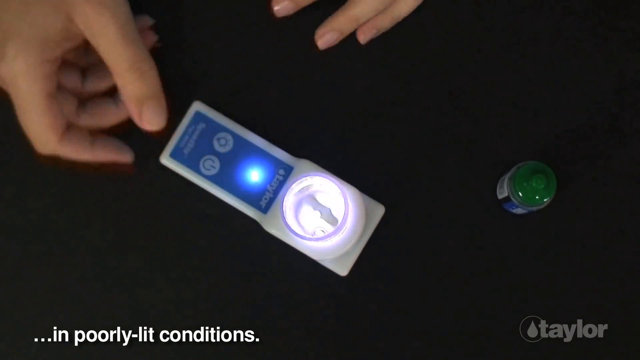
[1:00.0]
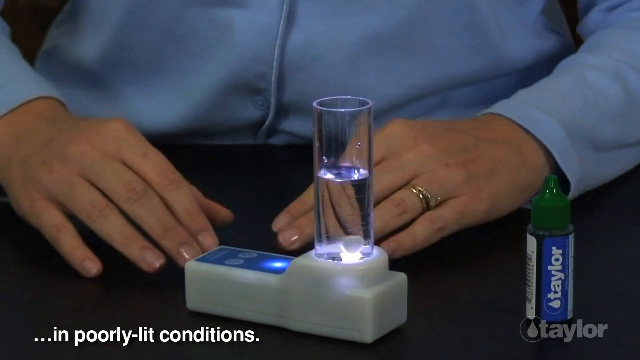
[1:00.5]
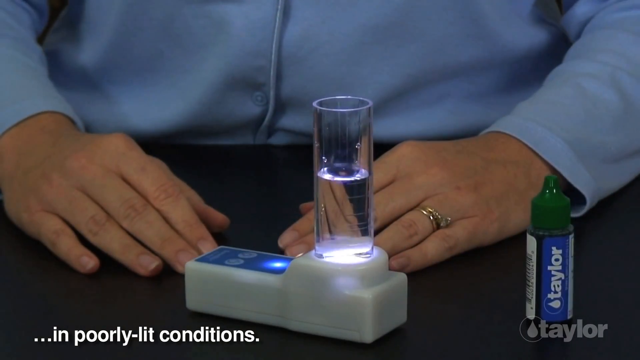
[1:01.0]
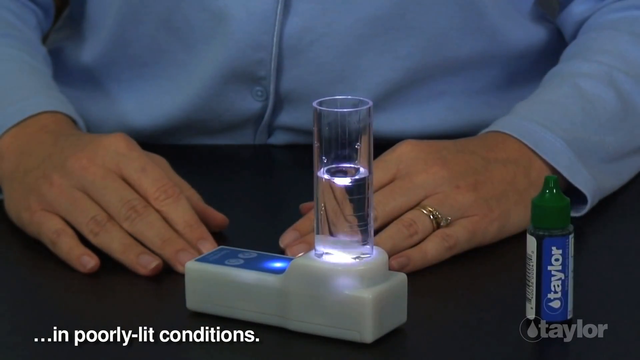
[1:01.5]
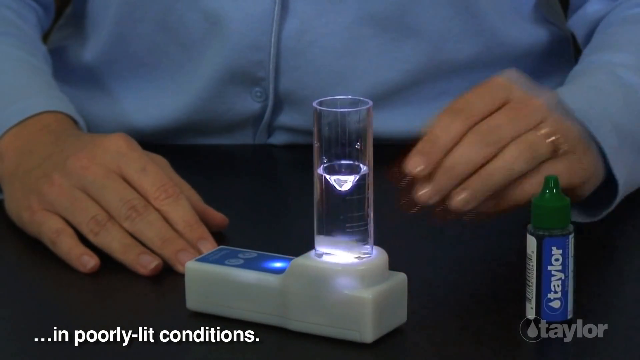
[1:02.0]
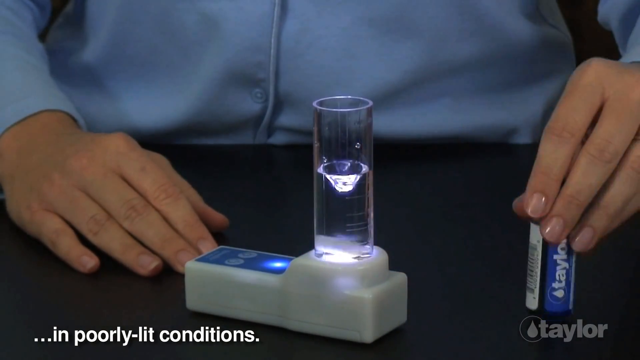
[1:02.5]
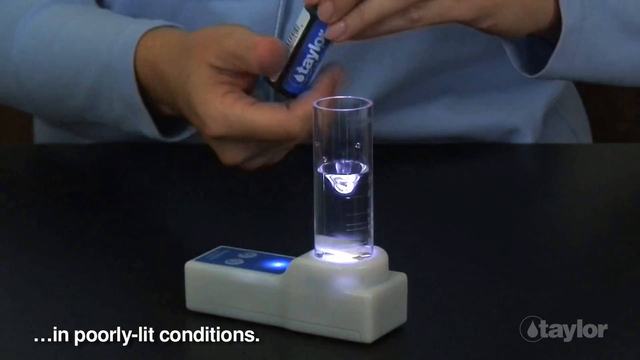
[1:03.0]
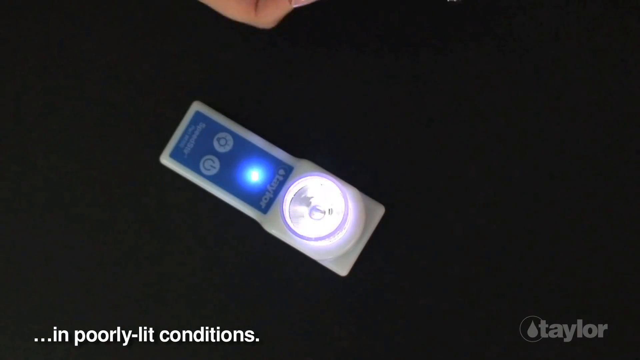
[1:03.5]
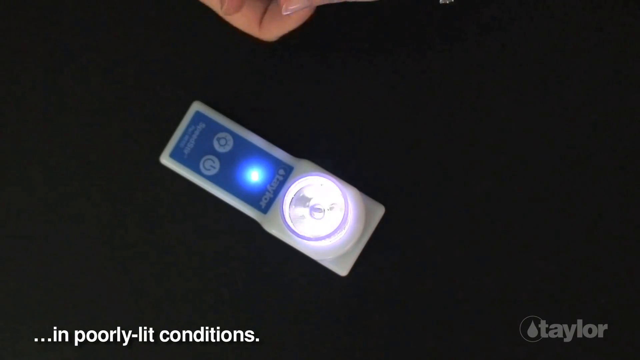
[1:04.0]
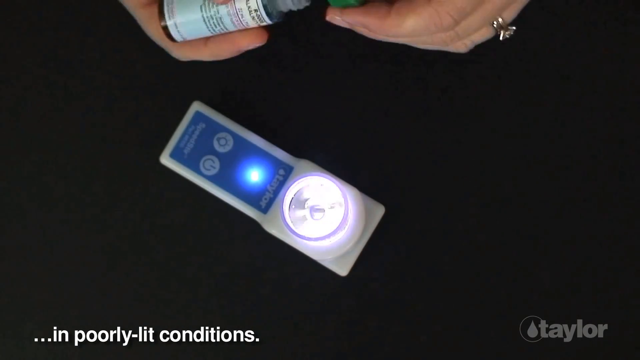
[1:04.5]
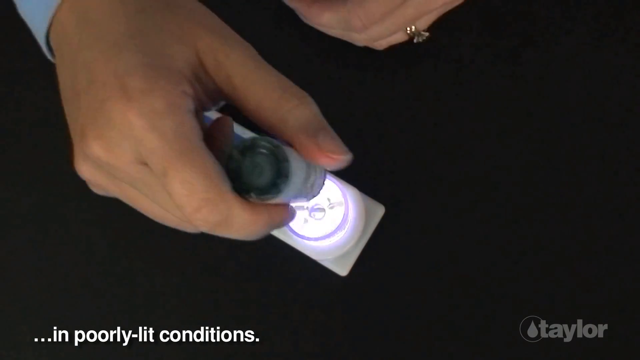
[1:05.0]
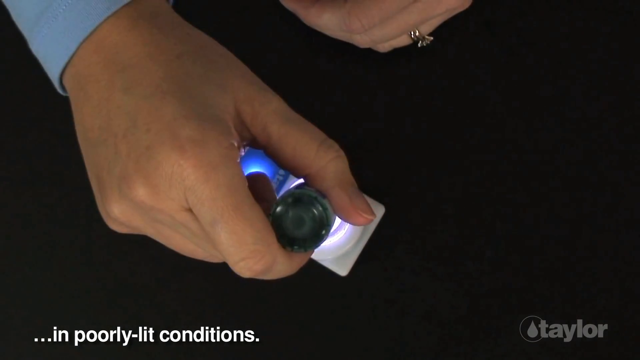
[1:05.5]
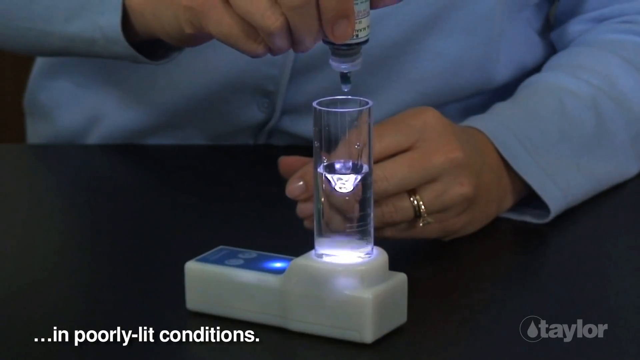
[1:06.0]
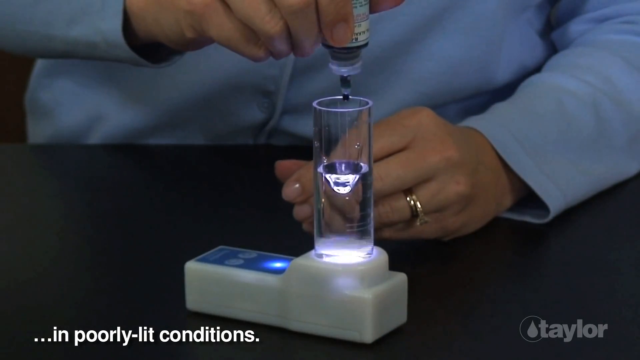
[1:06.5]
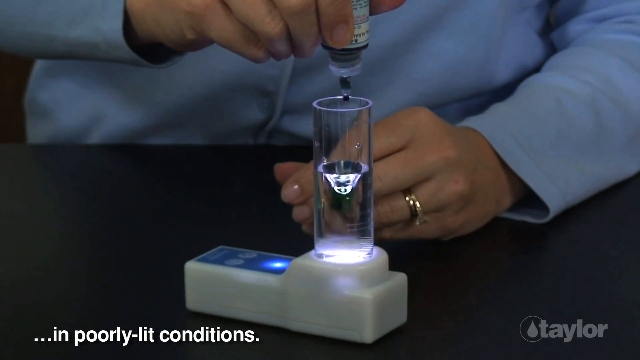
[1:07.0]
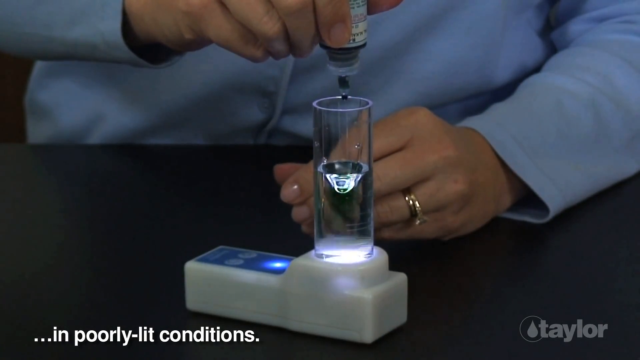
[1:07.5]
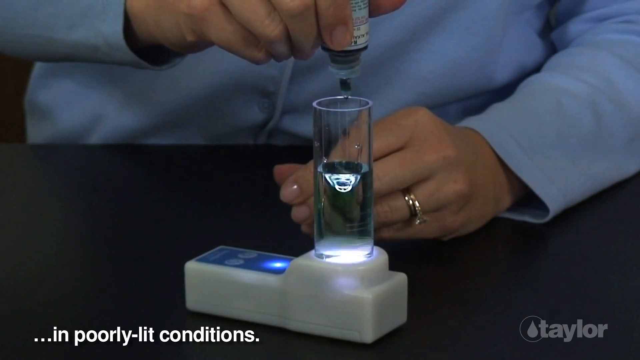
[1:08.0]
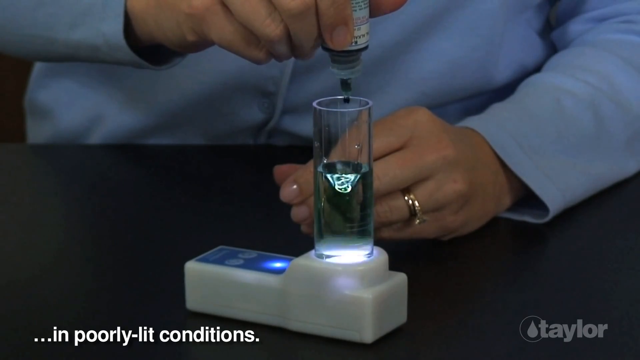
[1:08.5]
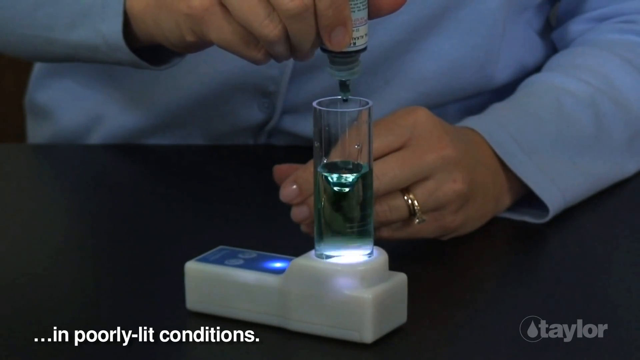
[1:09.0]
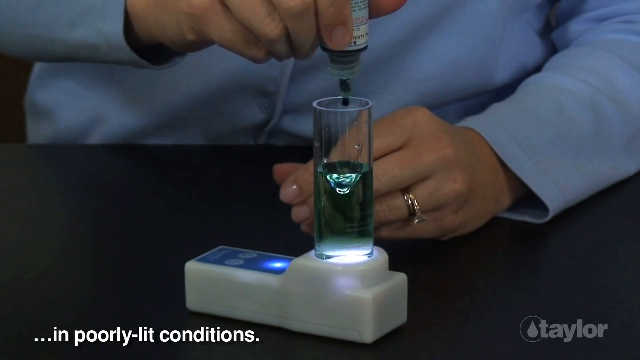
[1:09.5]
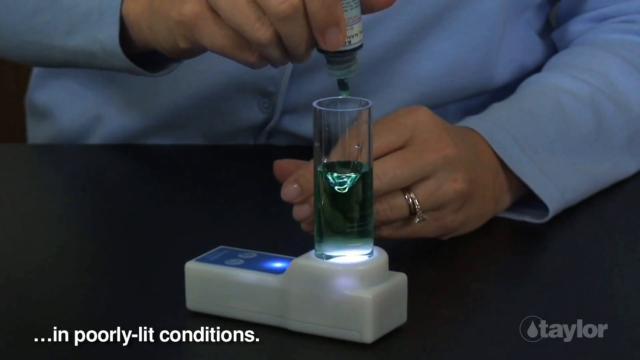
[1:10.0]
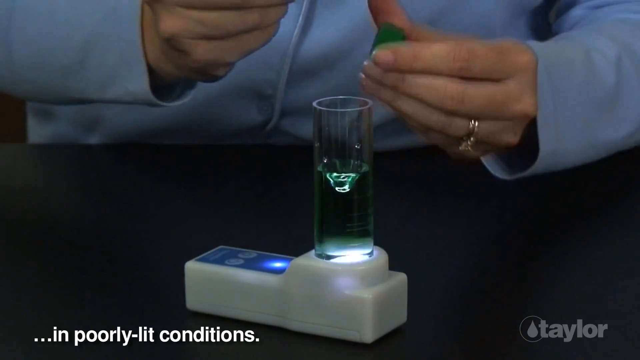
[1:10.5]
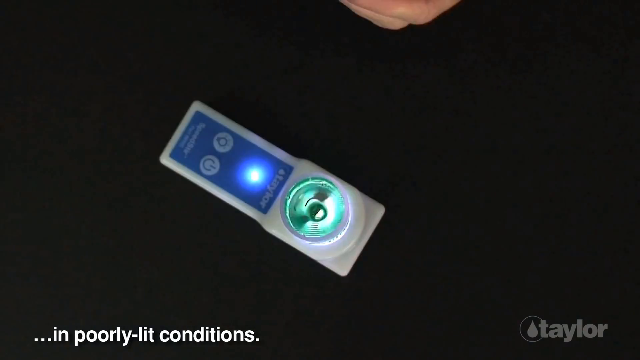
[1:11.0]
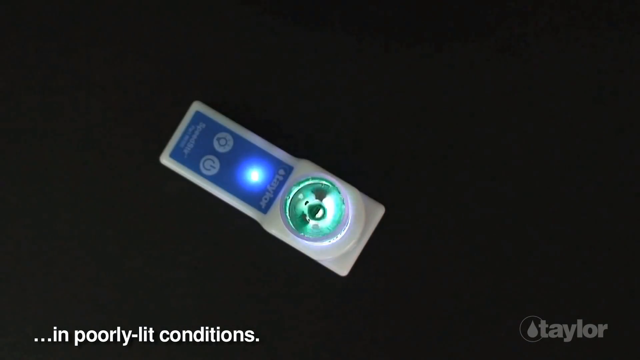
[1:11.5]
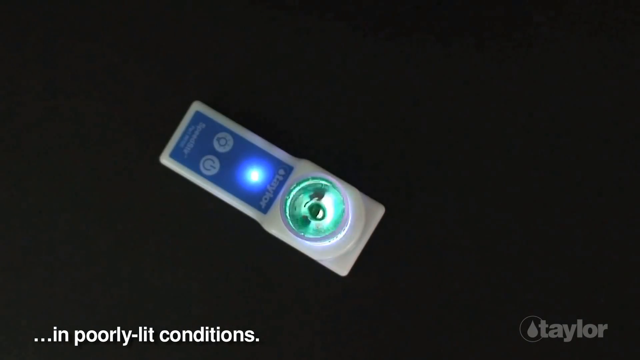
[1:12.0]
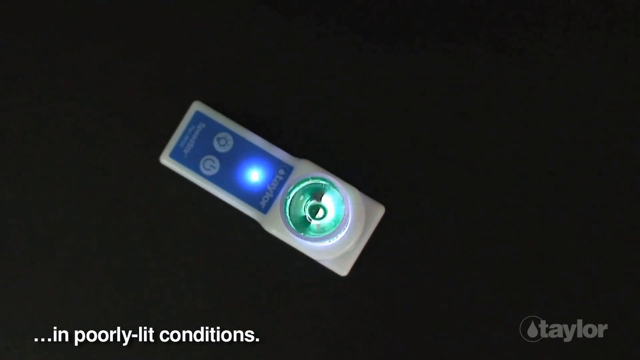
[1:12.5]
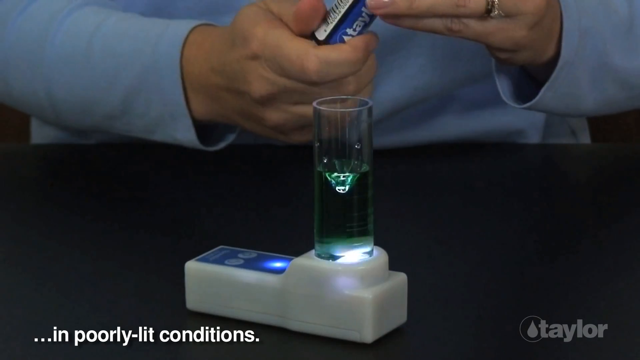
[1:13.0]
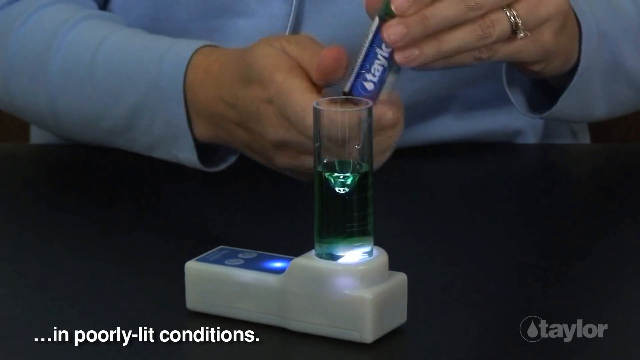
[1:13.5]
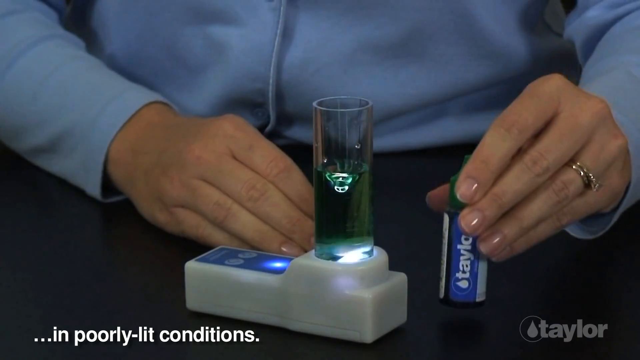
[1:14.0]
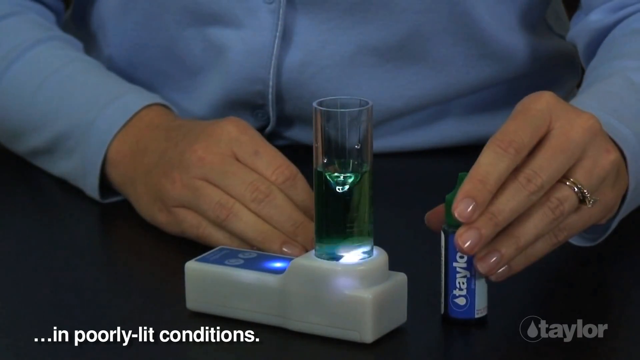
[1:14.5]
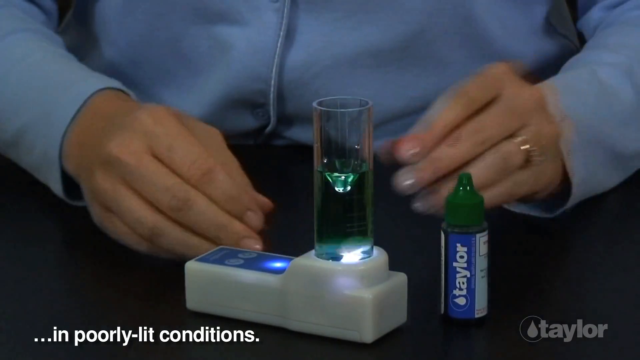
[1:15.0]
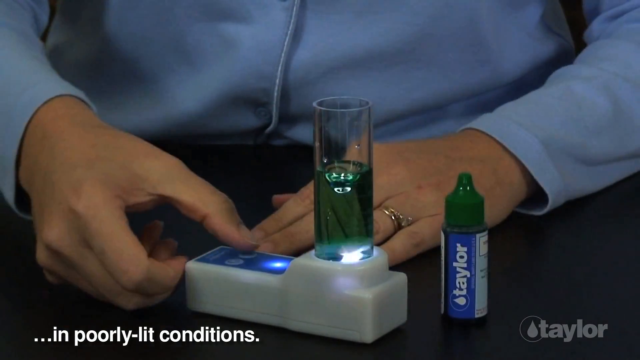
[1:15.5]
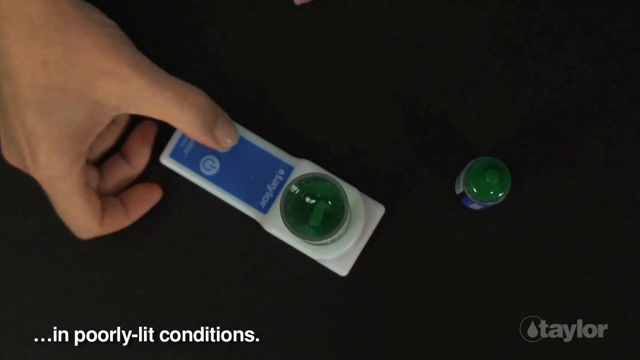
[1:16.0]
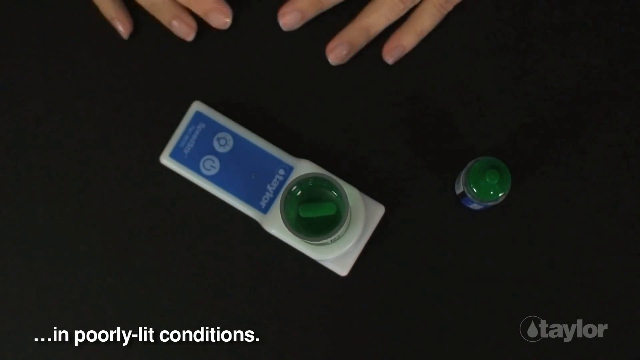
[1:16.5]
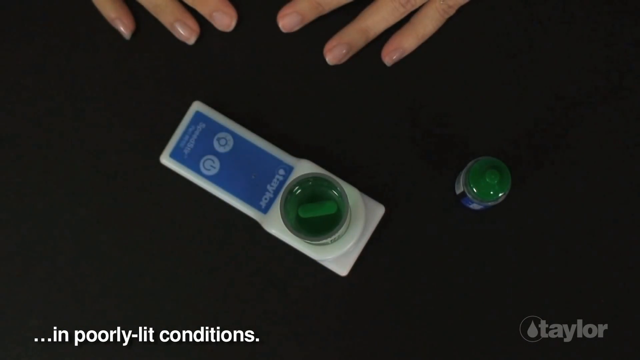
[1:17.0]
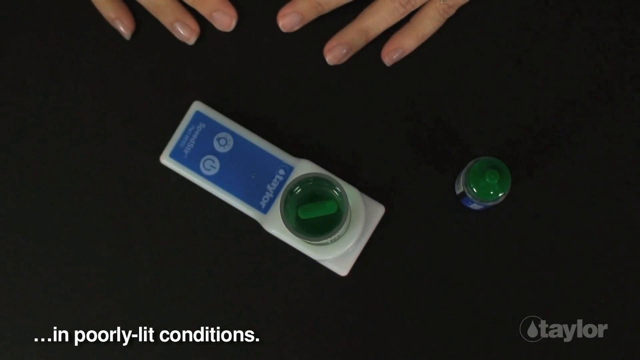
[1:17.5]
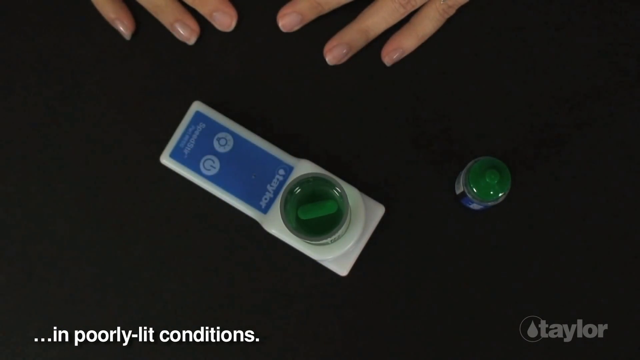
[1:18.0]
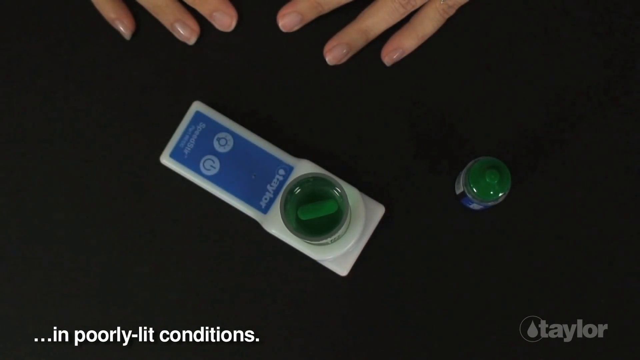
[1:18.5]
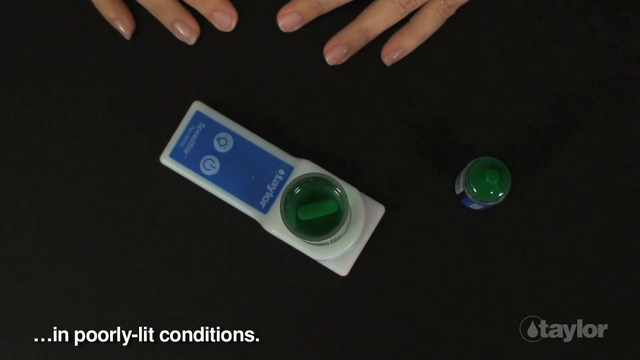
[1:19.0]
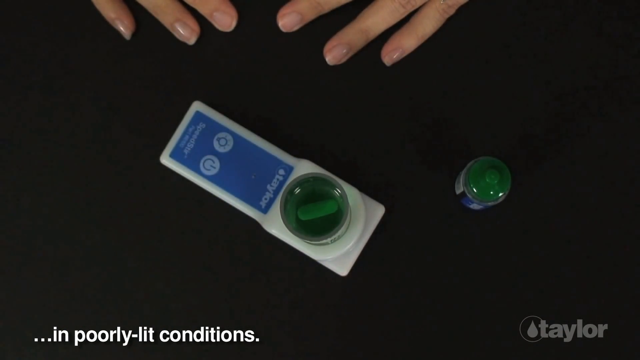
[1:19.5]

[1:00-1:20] From the top view, the liquid rotates, and there is a light that looks like it is at the bottom of the cylinder, with white light emanating from the bottom; this time, unlike before, the cylinder is lit from below. The top, aerial view shows the button being pressed and the swirling starting, followed by a side view. In a front view, she unscrews the lid and adds a few green drops, seen from above, then from the side as the drops go in. The liquid turns green, shown from an aerial view and then from the side. The off button is pressed, the stirring slows down, and the liquid becomes still. The scene then switches to white text on a black background.